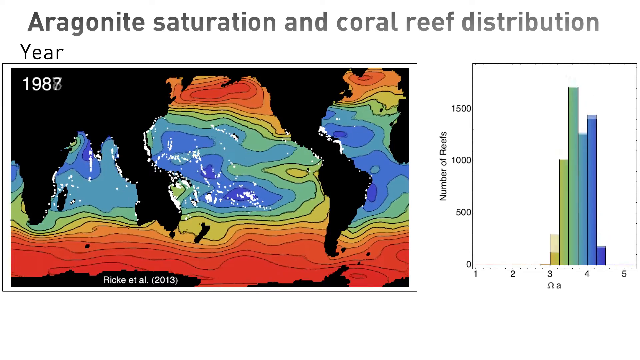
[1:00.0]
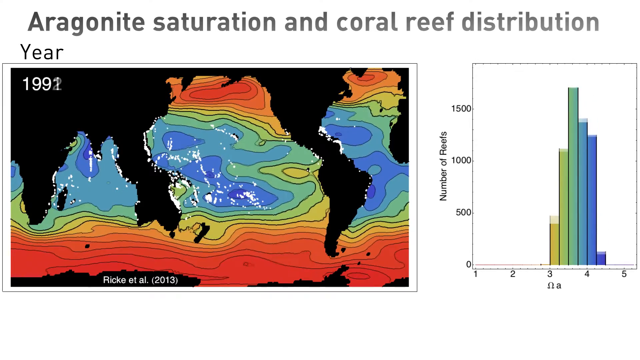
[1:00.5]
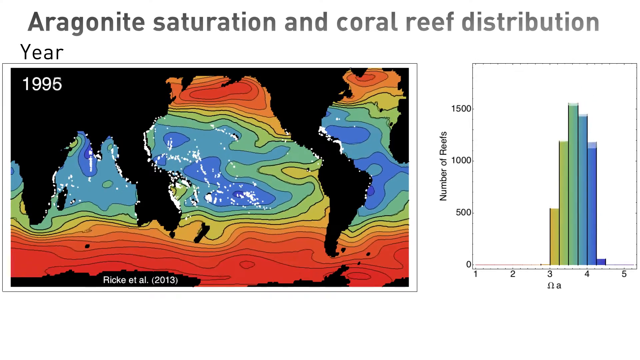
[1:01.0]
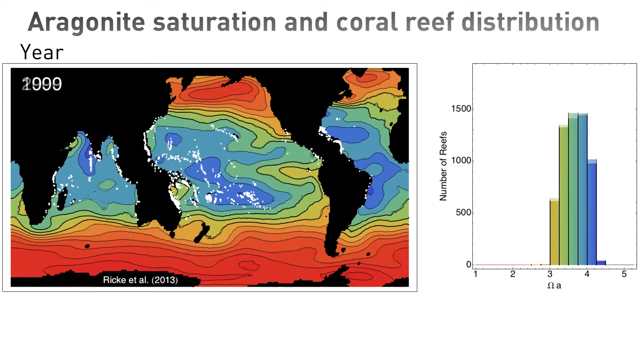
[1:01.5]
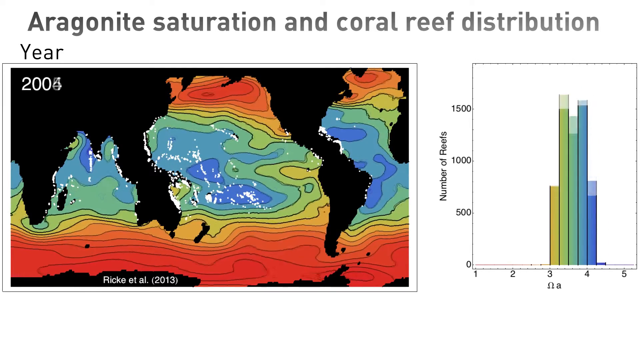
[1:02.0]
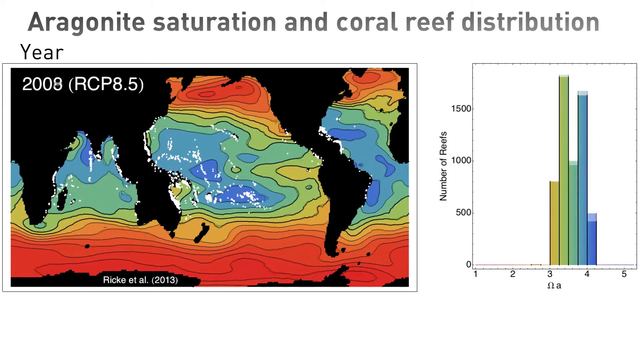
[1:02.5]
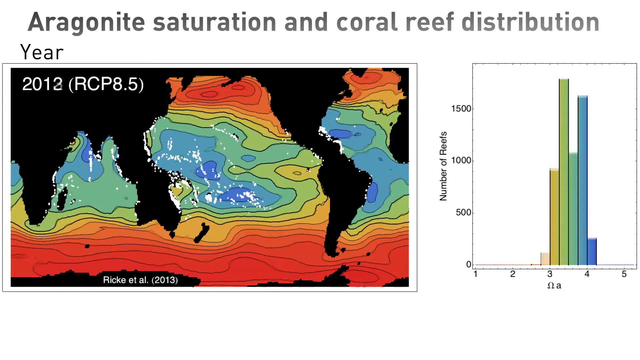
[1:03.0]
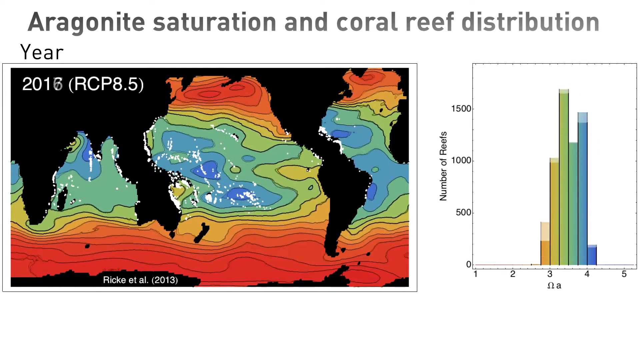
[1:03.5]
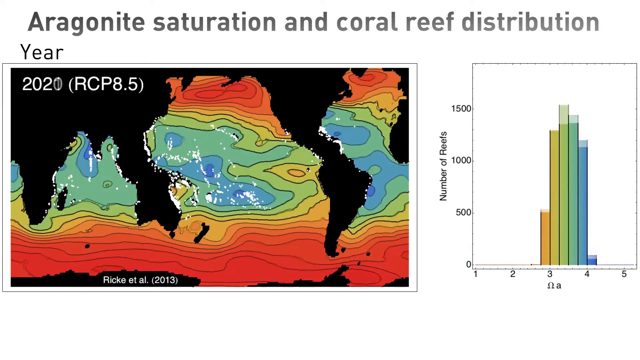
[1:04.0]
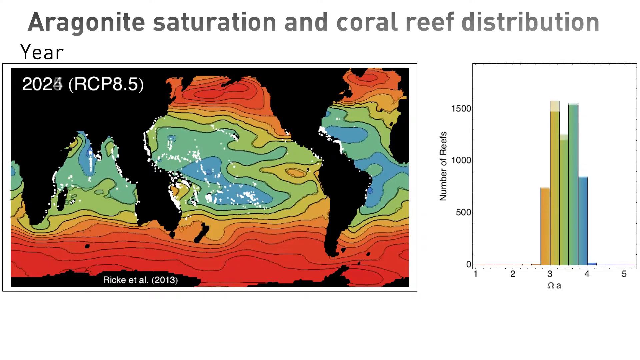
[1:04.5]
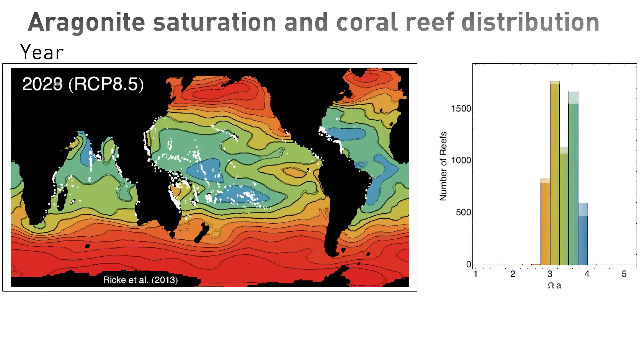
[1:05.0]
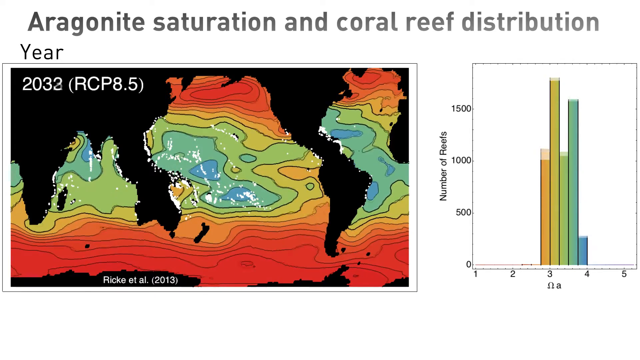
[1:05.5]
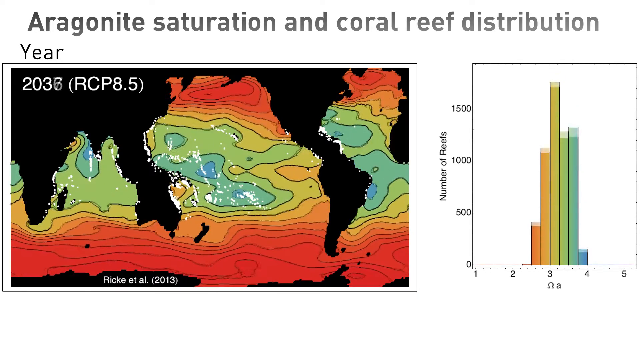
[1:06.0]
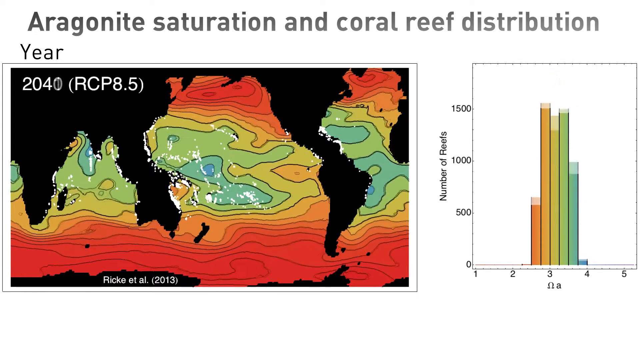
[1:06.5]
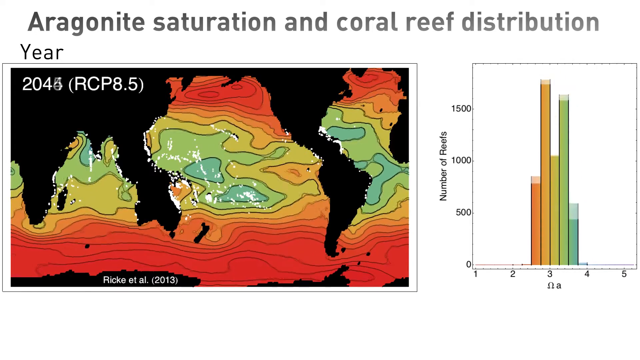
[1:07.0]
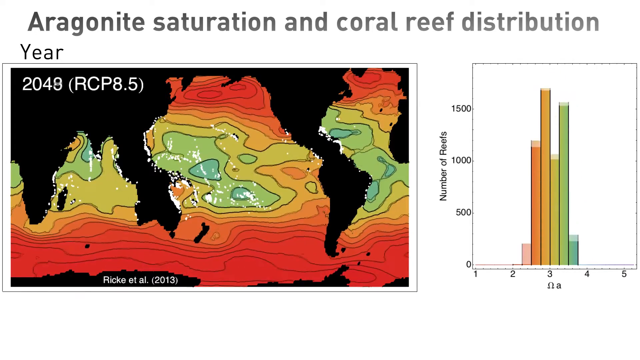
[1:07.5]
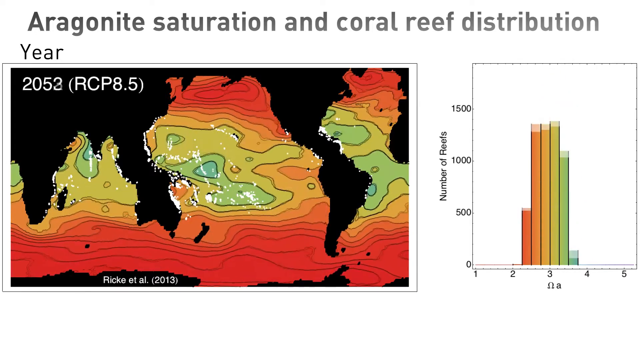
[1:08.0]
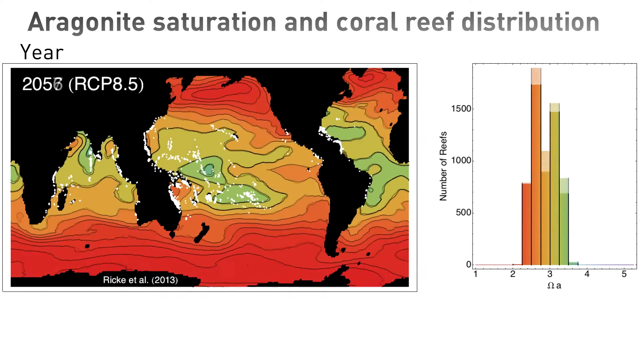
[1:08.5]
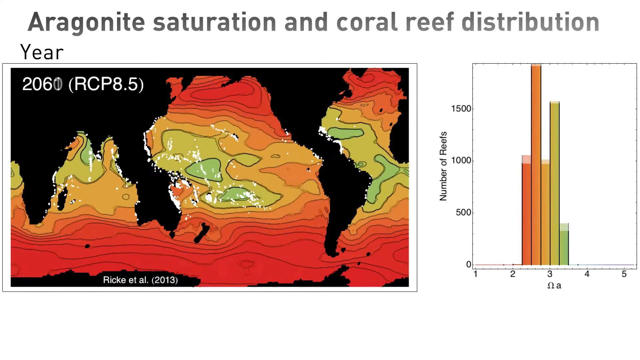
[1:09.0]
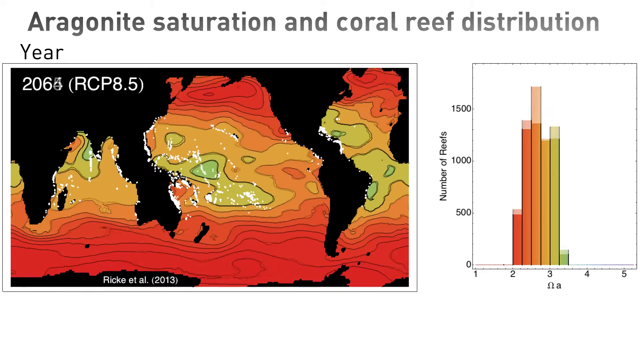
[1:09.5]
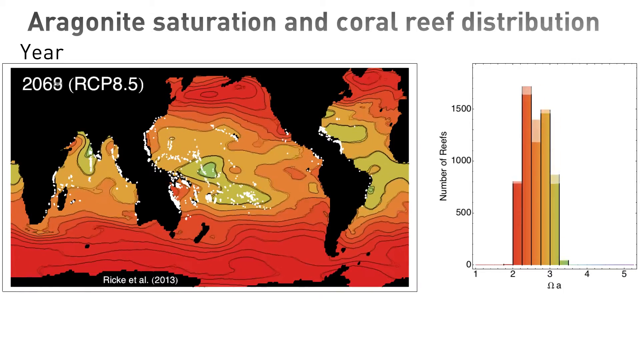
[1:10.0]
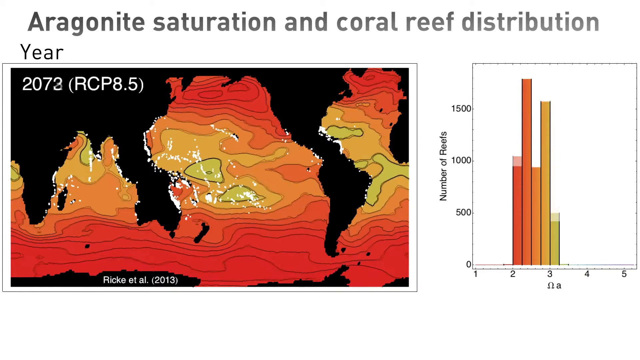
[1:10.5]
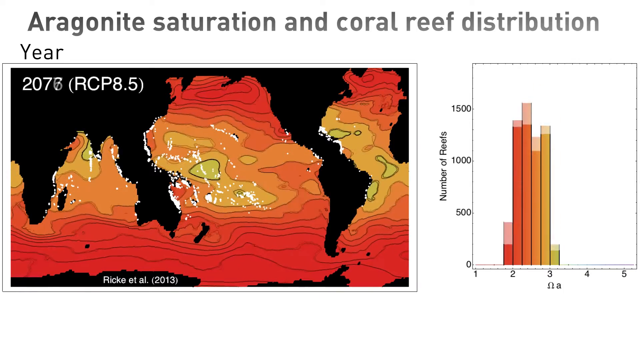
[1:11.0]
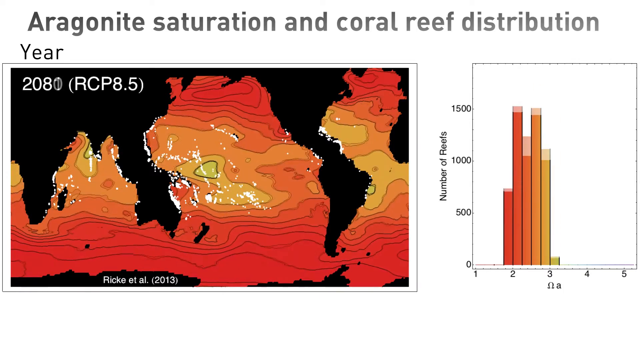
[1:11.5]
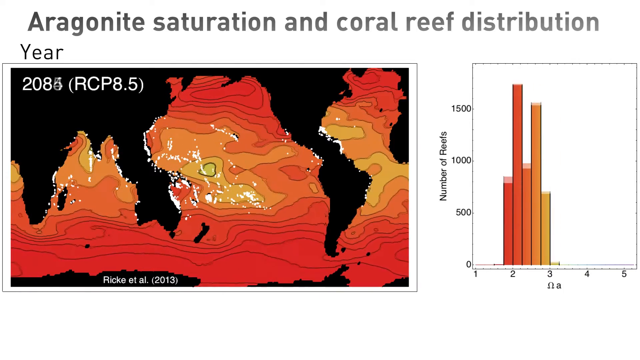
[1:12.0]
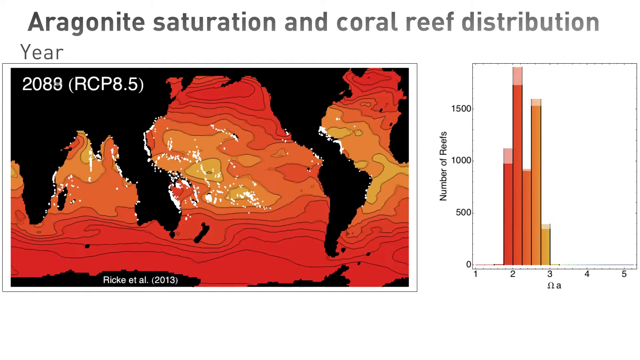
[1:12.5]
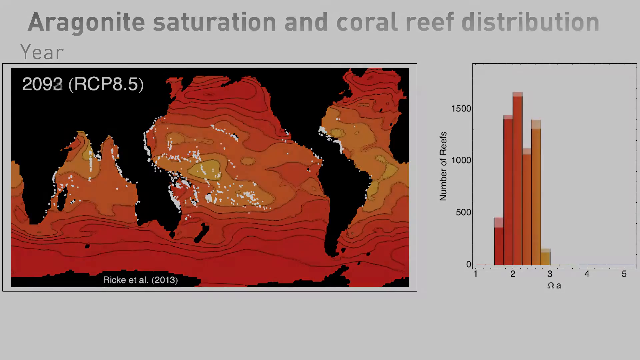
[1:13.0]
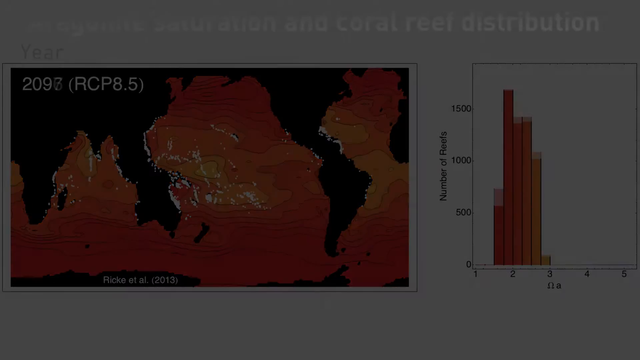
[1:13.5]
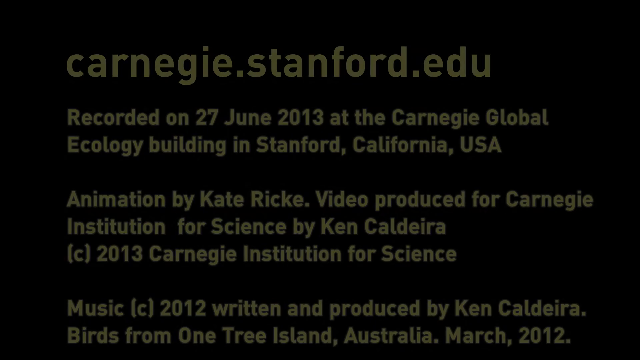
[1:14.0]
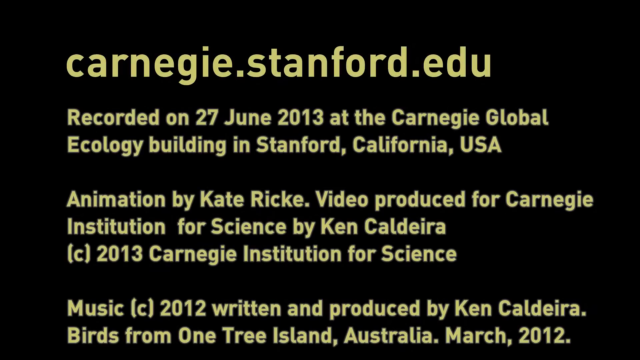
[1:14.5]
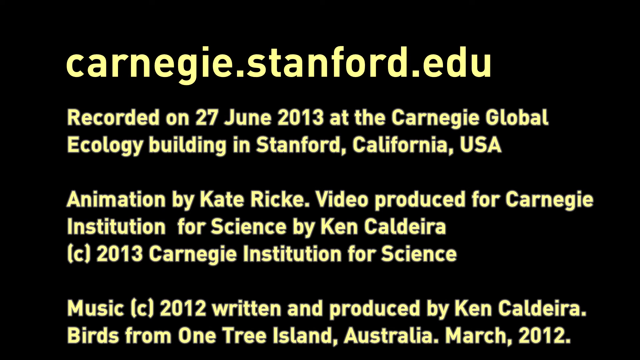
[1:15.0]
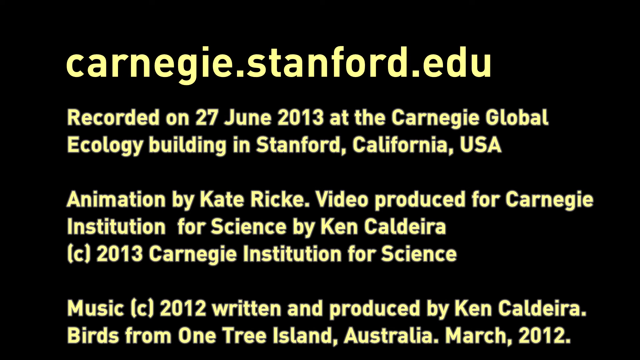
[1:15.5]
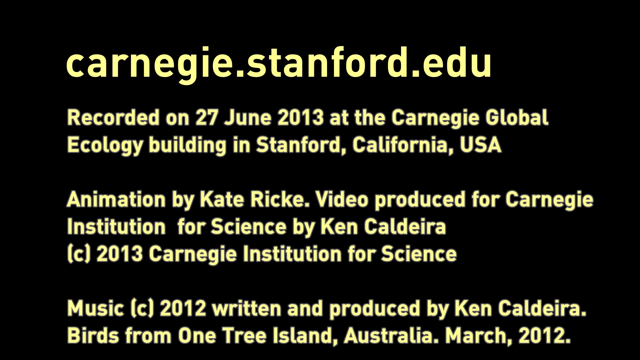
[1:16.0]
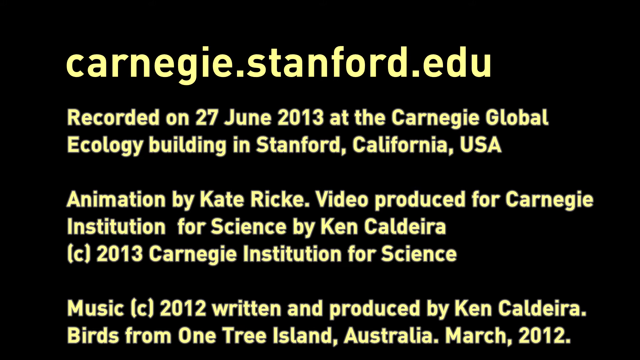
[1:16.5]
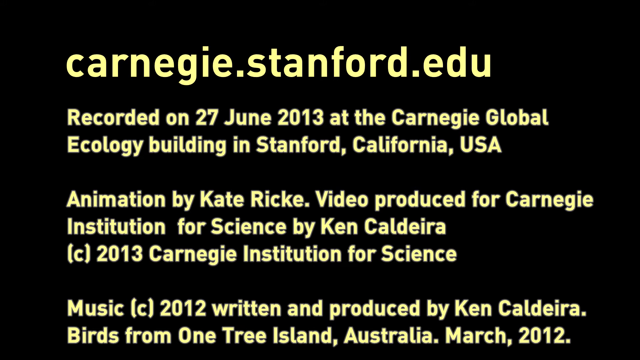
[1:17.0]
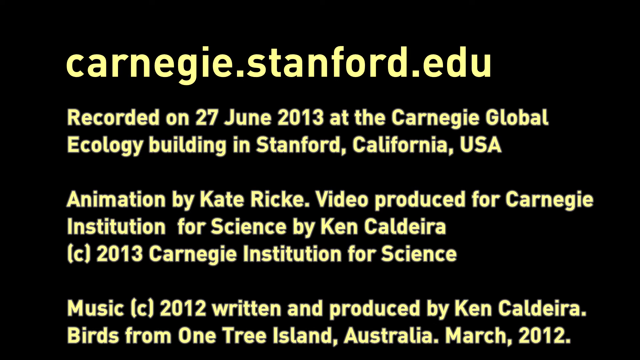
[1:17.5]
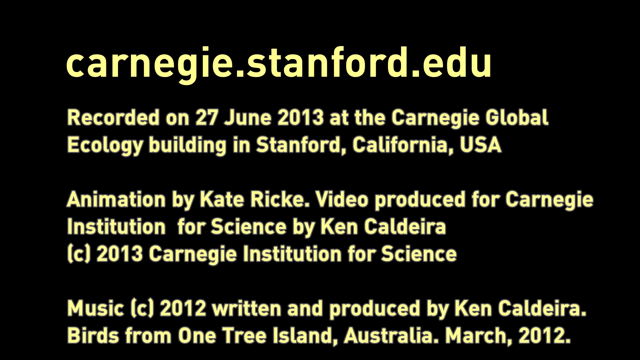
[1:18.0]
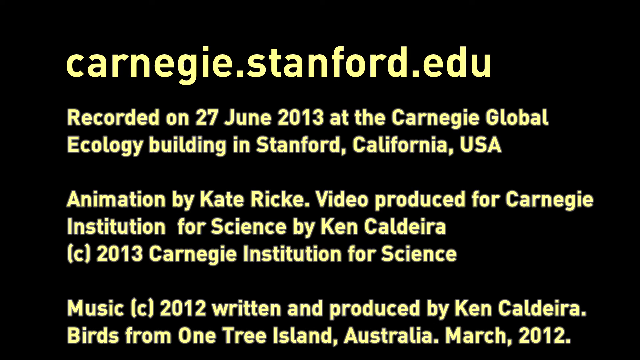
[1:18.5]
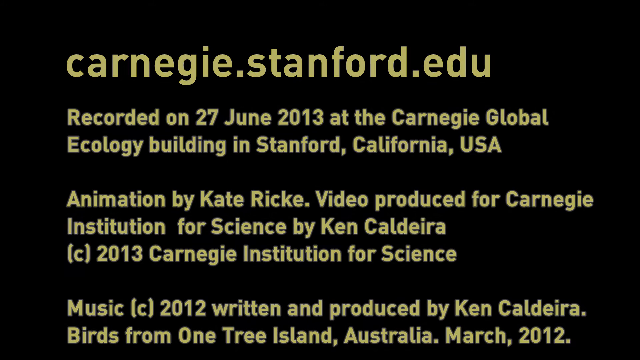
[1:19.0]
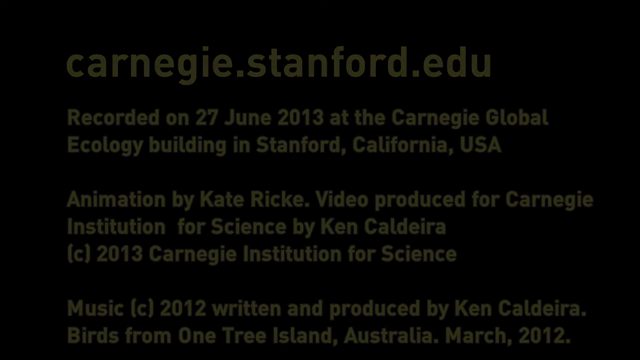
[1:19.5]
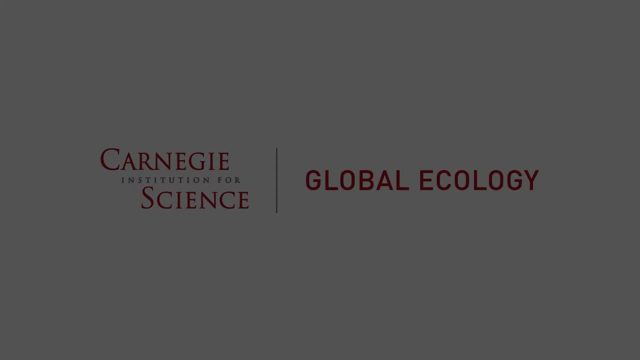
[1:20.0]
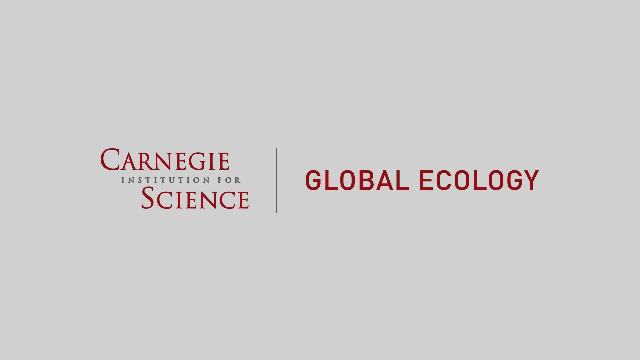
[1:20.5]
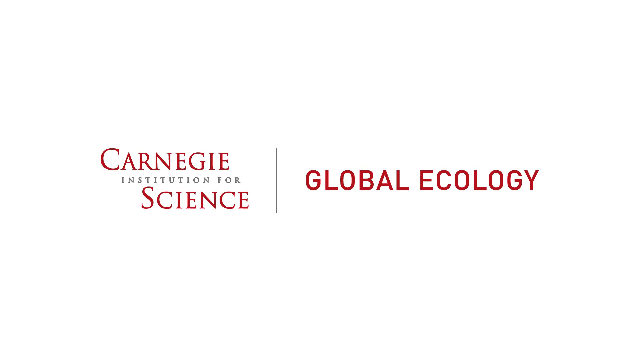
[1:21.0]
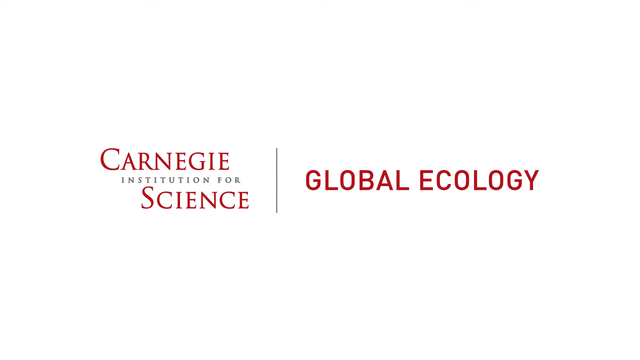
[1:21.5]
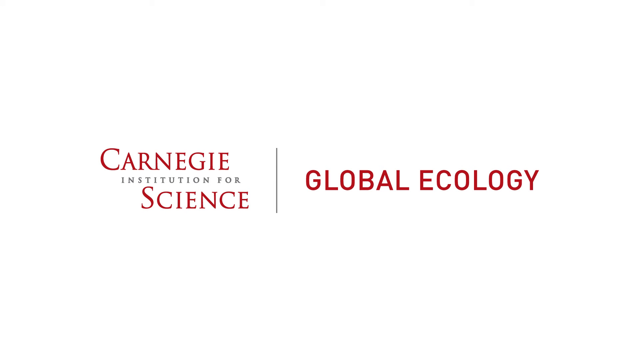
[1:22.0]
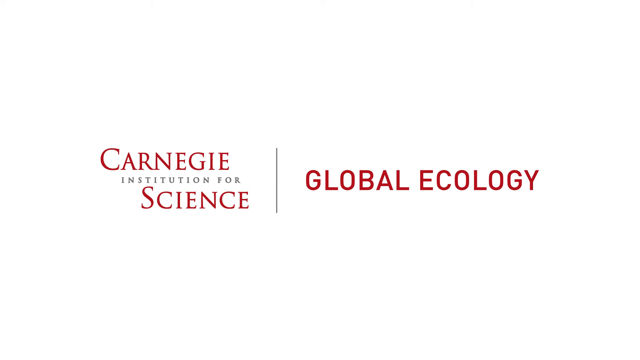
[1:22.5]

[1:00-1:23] The shot shows a depiction of the reefs on the planet. On the right side, a rectangle contains a graph with bars going up from the bottom; its left side gives values for the number of reefs from 0 up to 2000, and the bottom has numbers from 1 to 5. Far on the left side is a big picture of the Earth demonstrating the ocean and how the reefs are in it. In the upper left corner the year starts at 1983. As the year increases, the bars on the graph move up and down and shift slightly toward the left, and the depiction of the water changes: there is some blue in the middle and red on the outsides, with the red becoming more and more prominent. By 2033 there is almost no blue left, and the bars have shifted toward the value of 3. By 2063 the ocean is red with just a little orange and a tiny speck of green, and the bars keep shifting further left. In 2076 the ocean colors are just red and orange, and the bars have moved left again, about evenly spread between two and three. By 2089 the ocean looks just red and orange, and the bars are tallest above two, where they are red, with some short bars above three in a kind of light orange color. The screen then goes black and slowly transitions, and white and yellow text appears reading: "Carnegie.Stanford.edu, recorded on 27 June 2013 at the Carnegie Global Ecology Building in Stanford, California, USA. Animation by Katie Ricke. Video produced for Carnegie Institution for Science by Ken Calderia. Copyright 2013, Carnegie Institution for Science." That transitions to a white screen that reads "Carnegie Institution for Science Global Ecology."